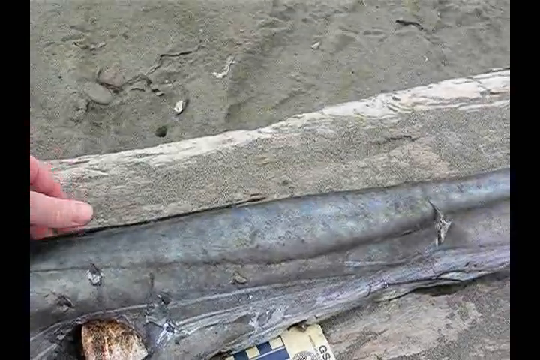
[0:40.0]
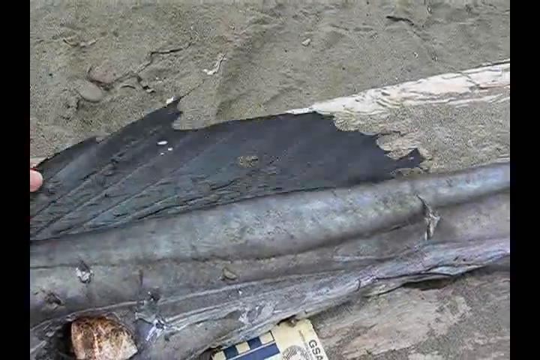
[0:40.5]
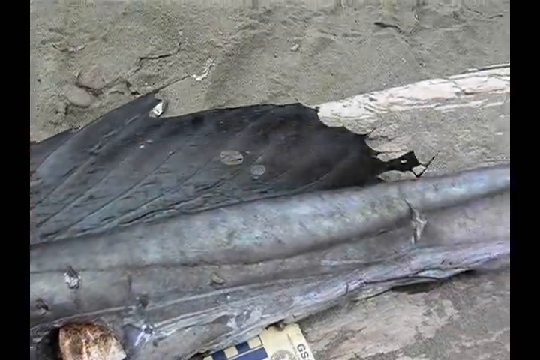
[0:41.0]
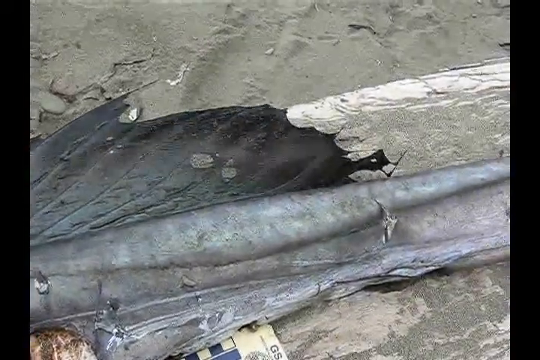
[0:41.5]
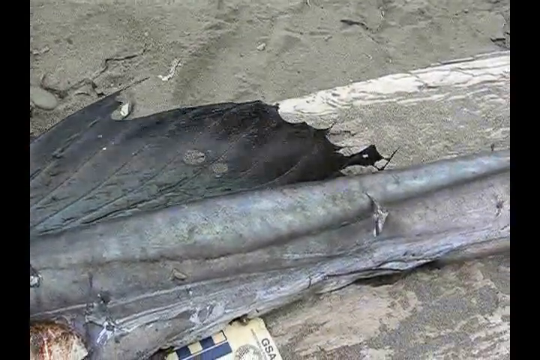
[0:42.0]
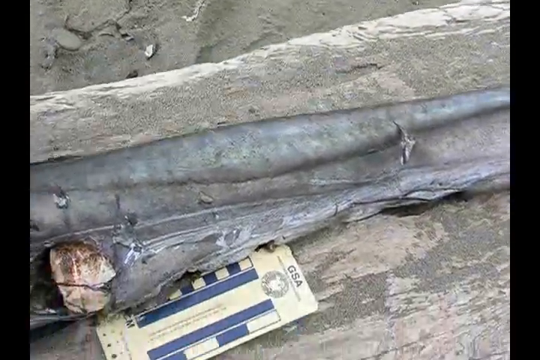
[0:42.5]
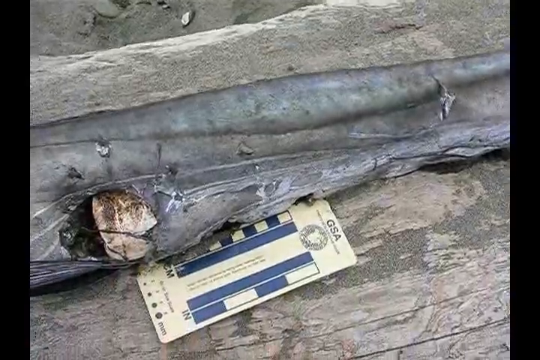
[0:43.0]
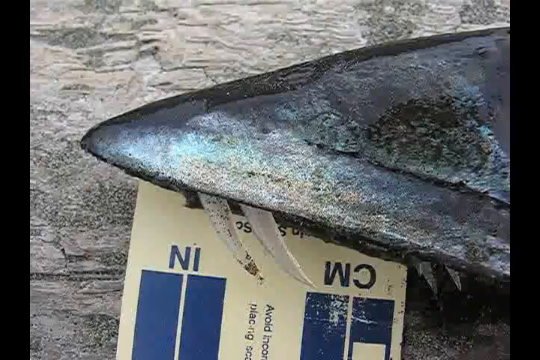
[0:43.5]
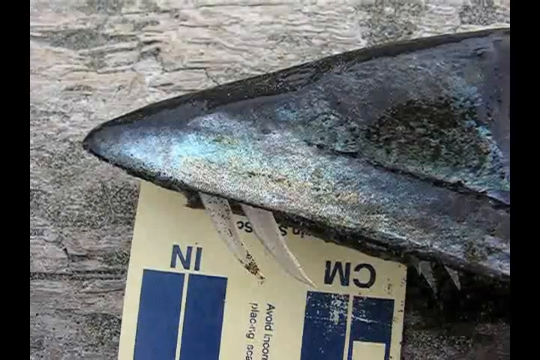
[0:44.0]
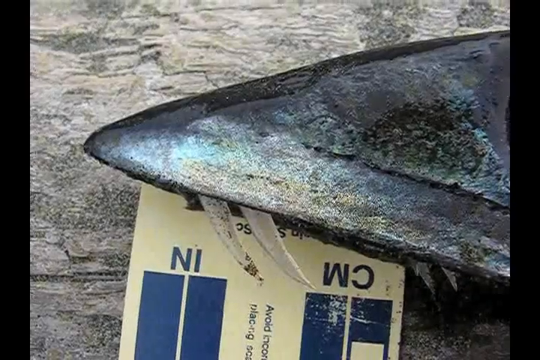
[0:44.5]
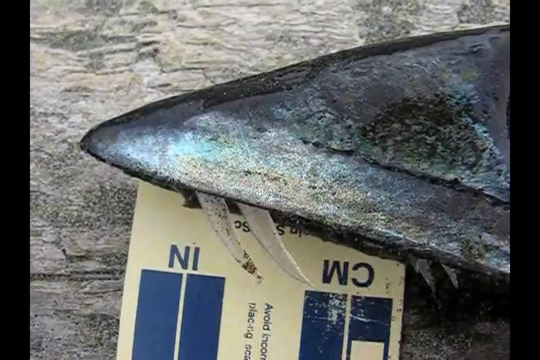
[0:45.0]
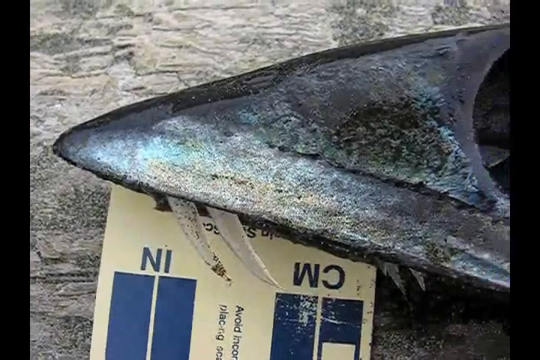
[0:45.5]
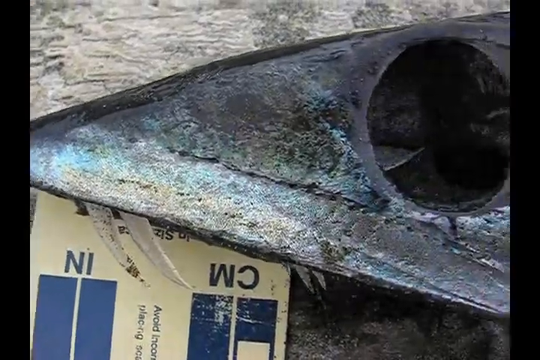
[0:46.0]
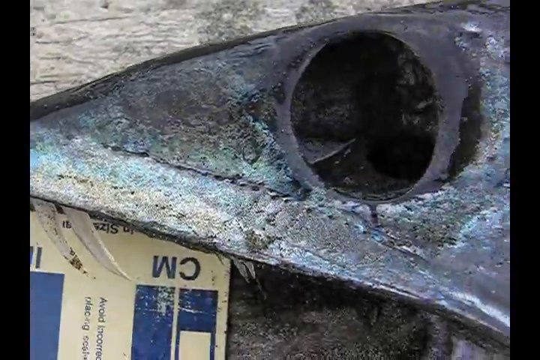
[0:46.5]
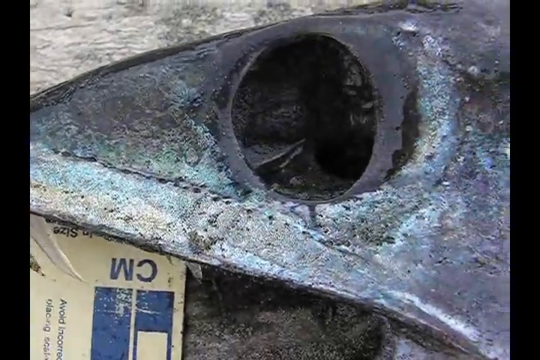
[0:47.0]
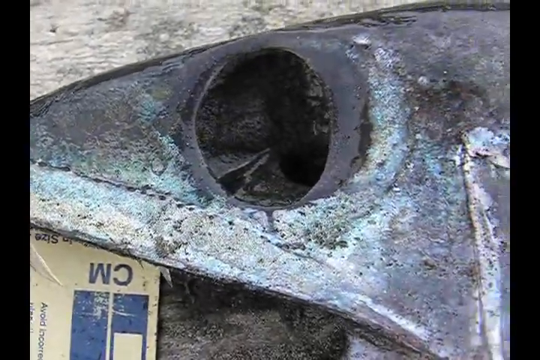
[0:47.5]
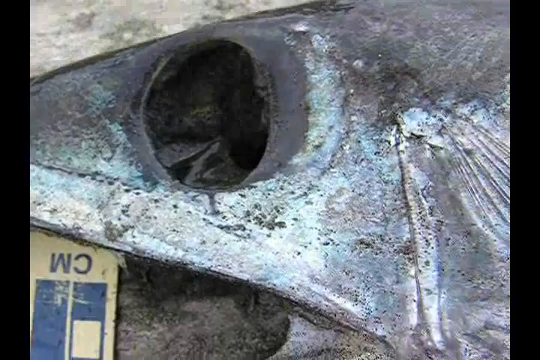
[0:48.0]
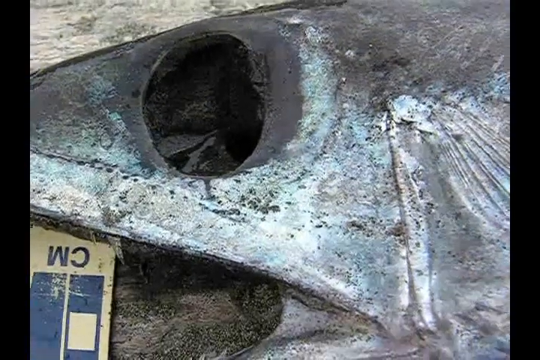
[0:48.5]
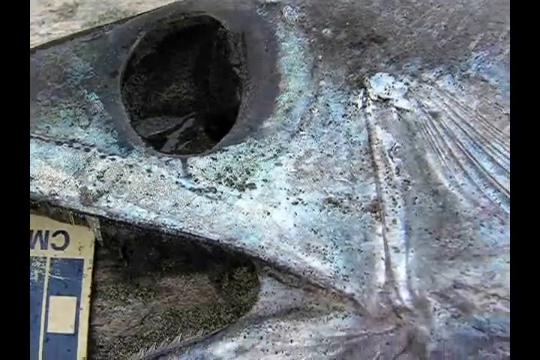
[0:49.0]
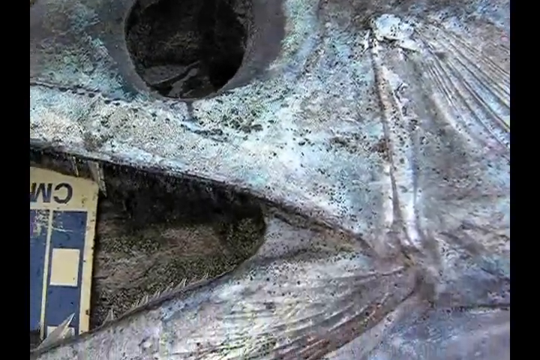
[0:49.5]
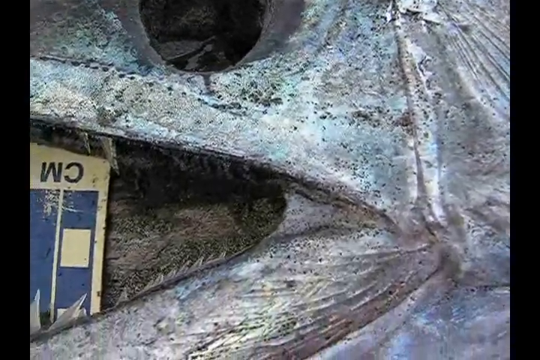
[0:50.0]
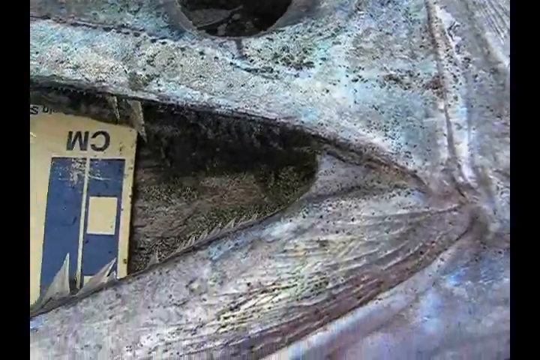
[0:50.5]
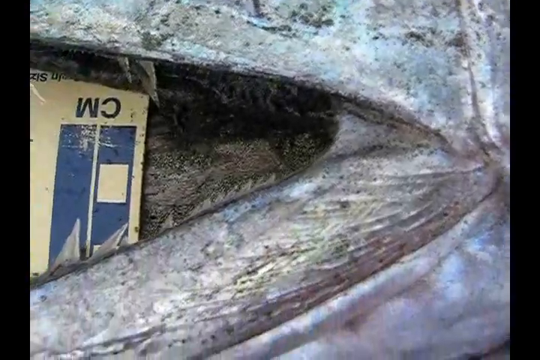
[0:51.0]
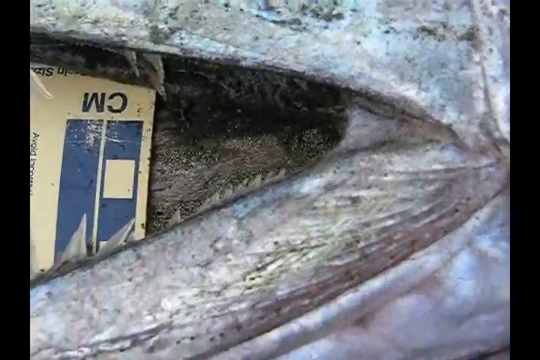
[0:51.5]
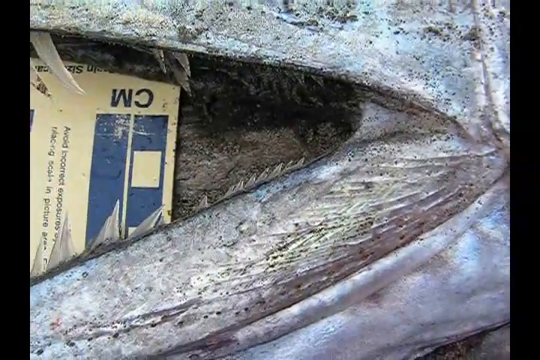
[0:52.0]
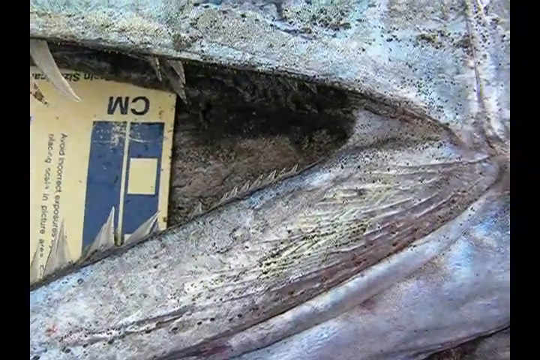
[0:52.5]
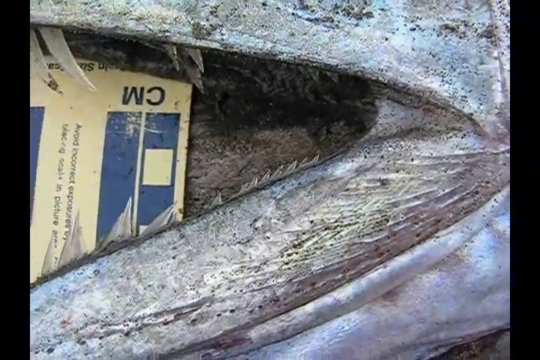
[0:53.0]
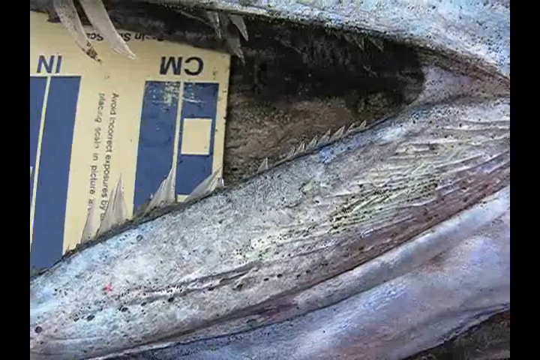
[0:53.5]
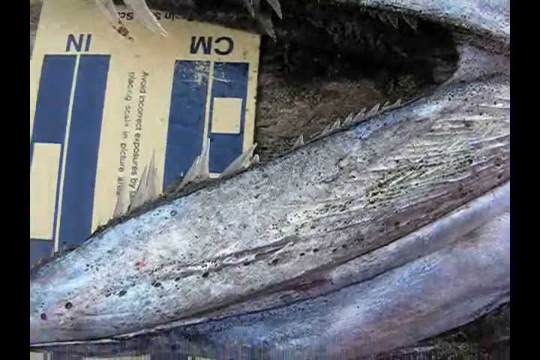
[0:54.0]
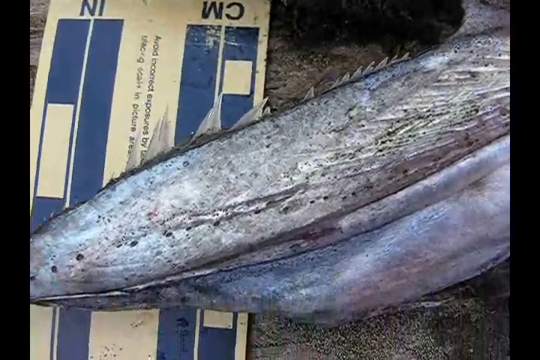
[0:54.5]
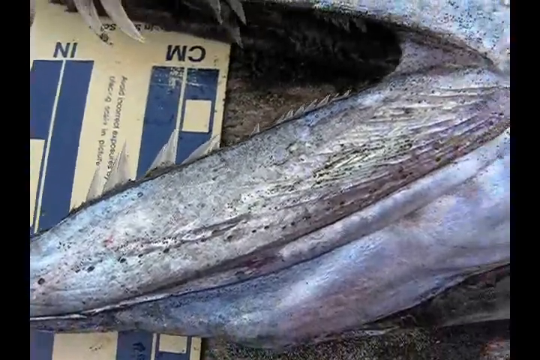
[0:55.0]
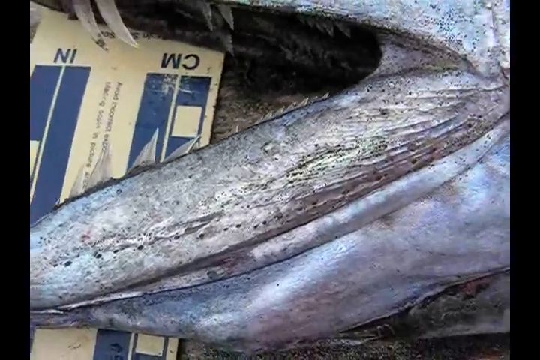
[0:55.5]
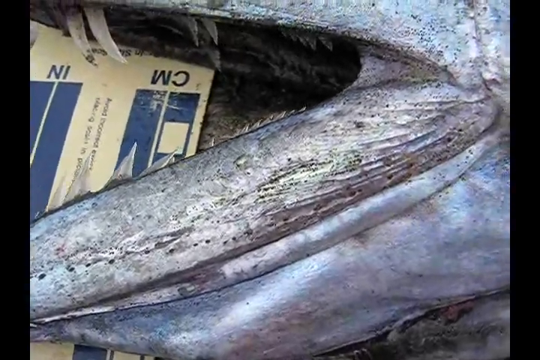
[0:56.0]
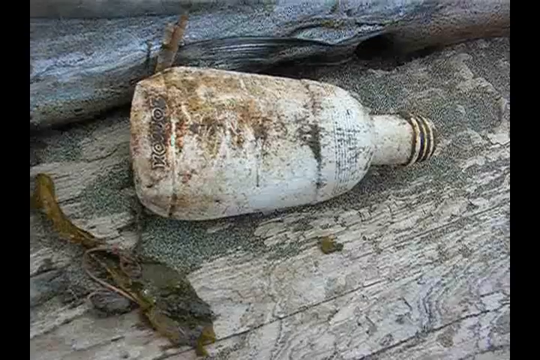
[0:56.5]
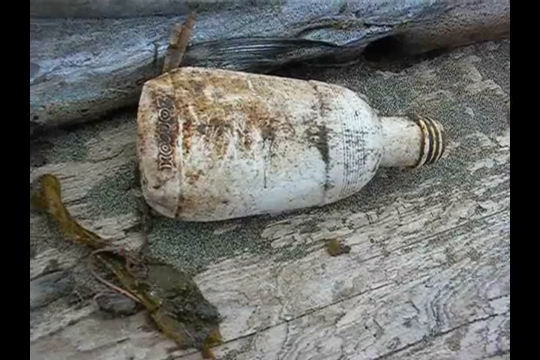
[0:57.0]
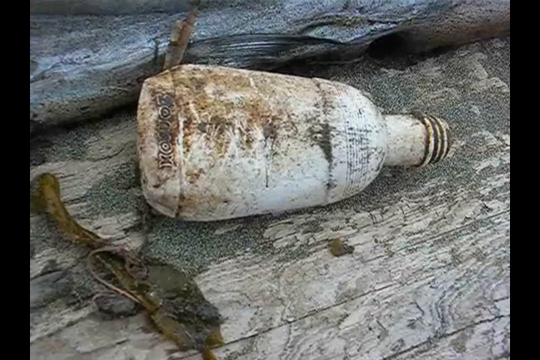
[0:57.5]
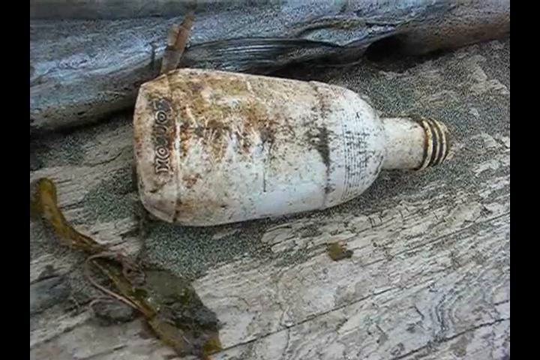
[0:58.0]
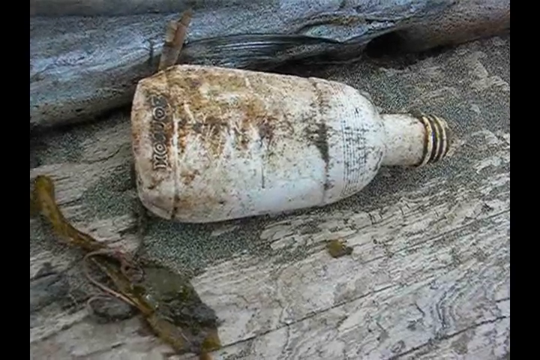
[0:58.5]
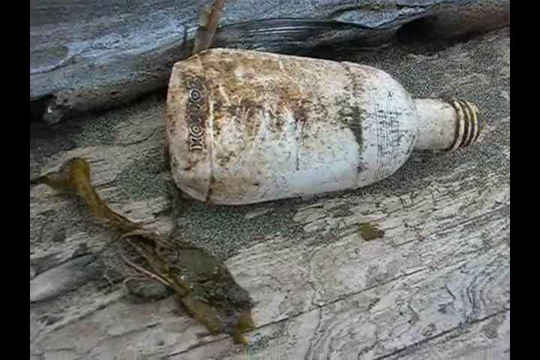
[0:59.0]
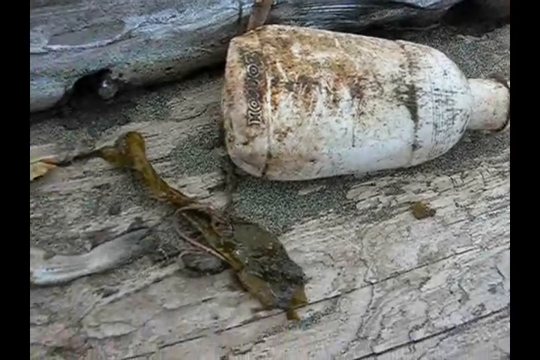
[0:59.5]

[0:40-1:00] A shot shows the middle of a deceased fish with gray coloring and some blue hues, laid on a sandy log on a beach. A Caucasian hand to the side carefully manipulates the fish to show its different parts. The hand extends the fin out a little, showing holes in the fish. Panning closer, many injuries across the fish are visible; the hand is very careful with them. The camera pans back to the mouth, showing very sharp teeth and the snout. A measuring card in centimeters and inches is next to it, but the exact measurements cannot be seen. Panning out across the fish, the eyes have been removed, leaving holes, and sand has accumulated on the fish, suggesting it has probably been on the beach for a while. The camera then carefully zooms in on what appears to be a plastic bottle. The bottle is white but has lots of dirt on it, and there seems to be some text on its bottom side facing left. The text is largely illegible due to the poor video quality and the dirt, but it seems to end with either an X or a K. The camera stays on it for a few moments.